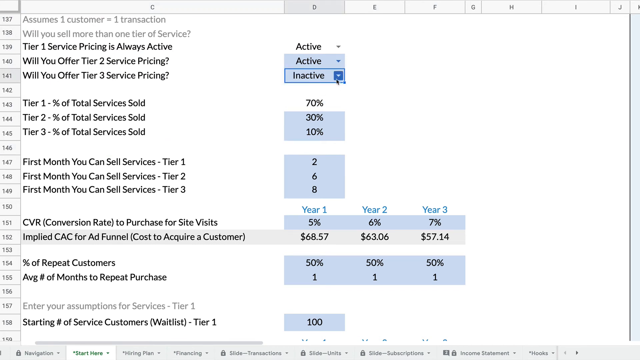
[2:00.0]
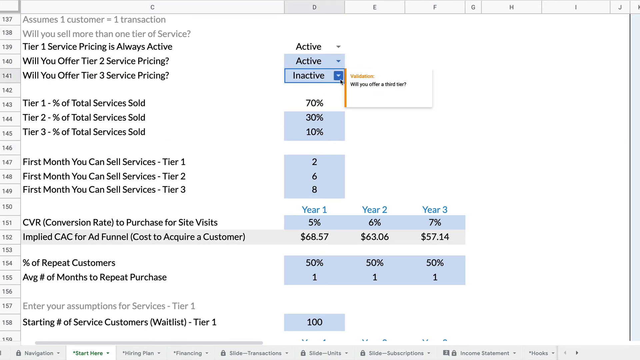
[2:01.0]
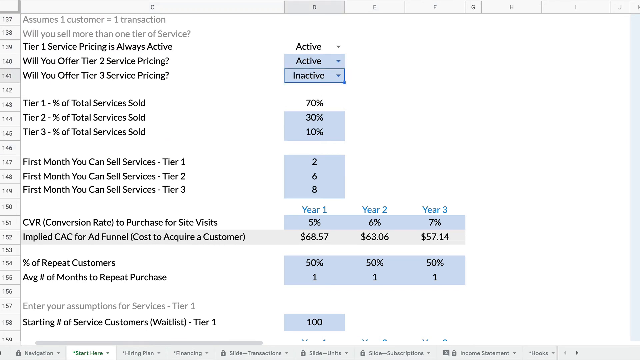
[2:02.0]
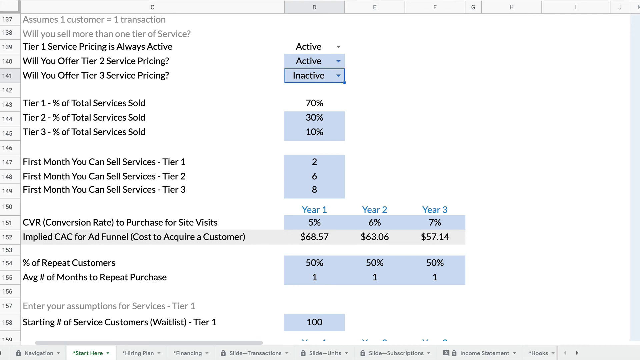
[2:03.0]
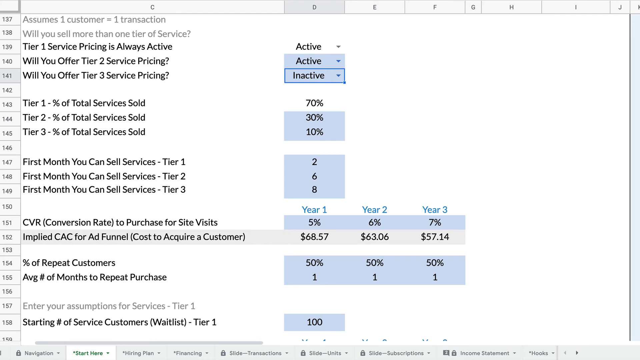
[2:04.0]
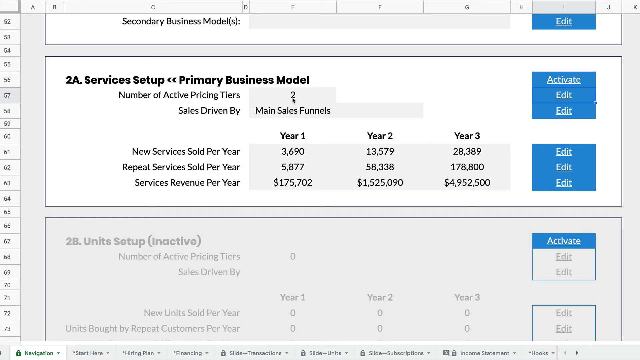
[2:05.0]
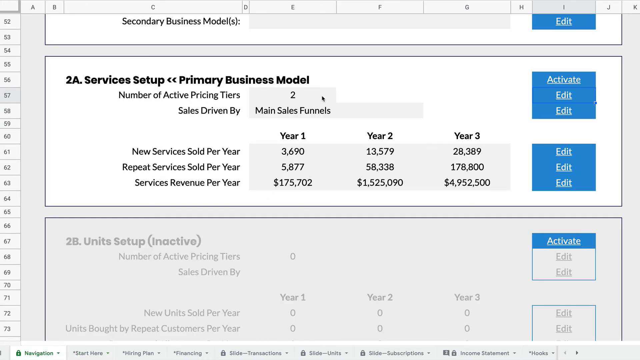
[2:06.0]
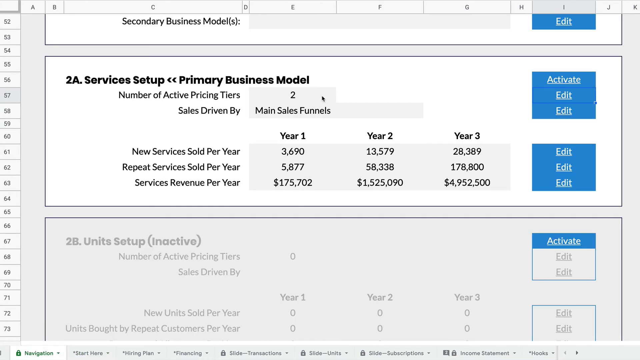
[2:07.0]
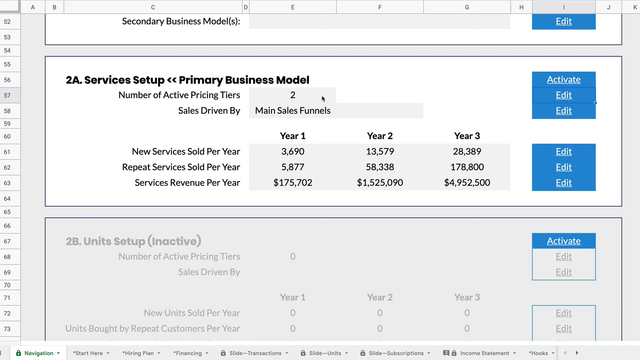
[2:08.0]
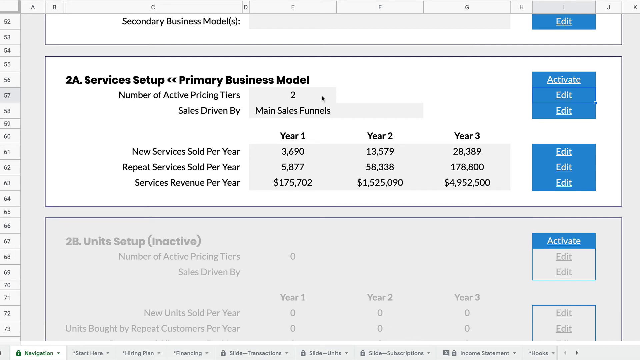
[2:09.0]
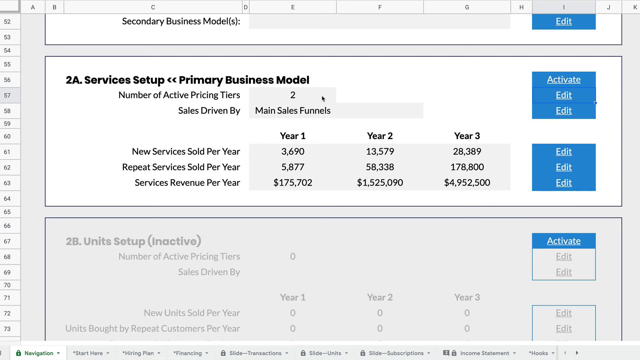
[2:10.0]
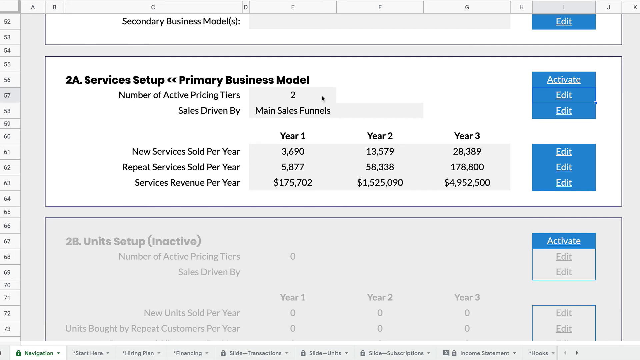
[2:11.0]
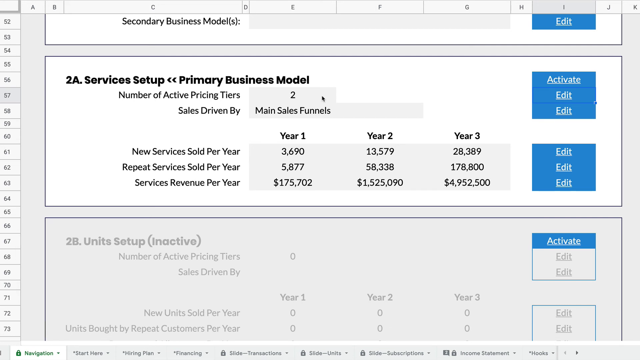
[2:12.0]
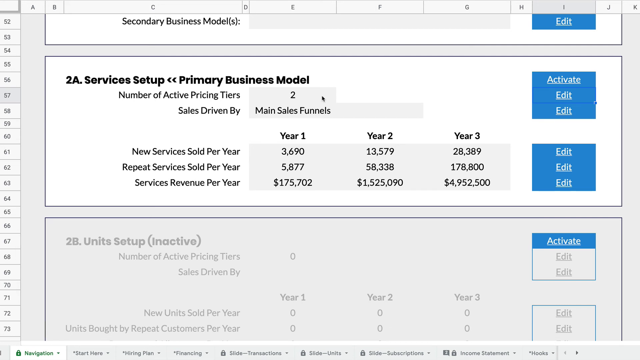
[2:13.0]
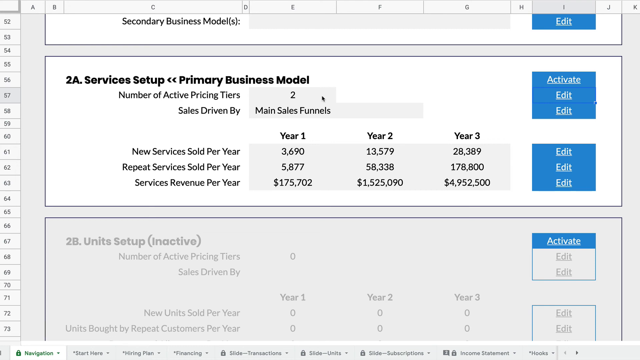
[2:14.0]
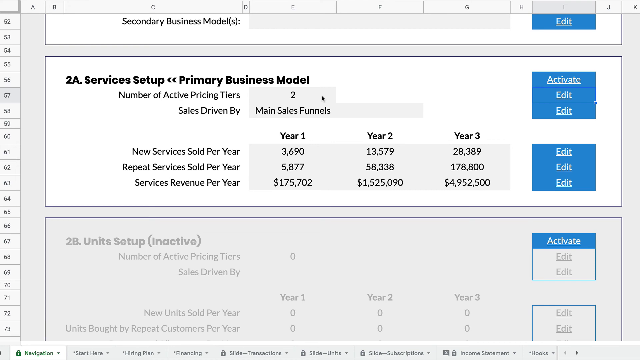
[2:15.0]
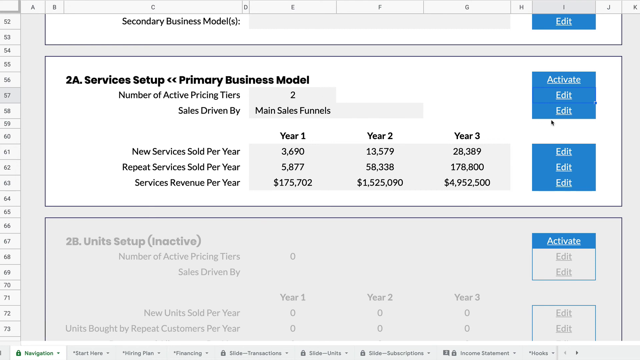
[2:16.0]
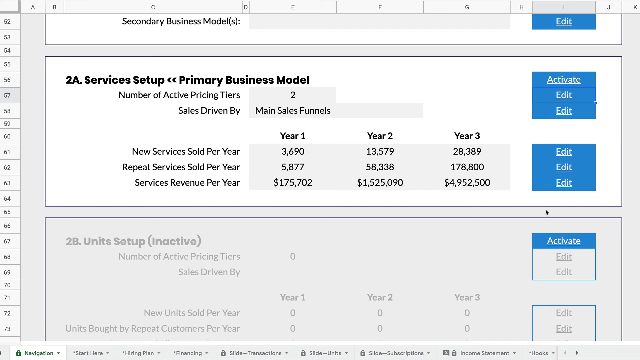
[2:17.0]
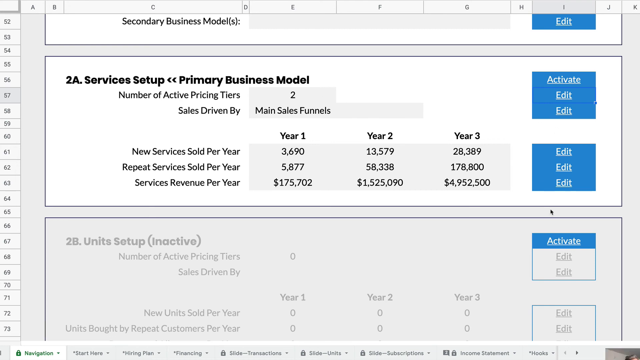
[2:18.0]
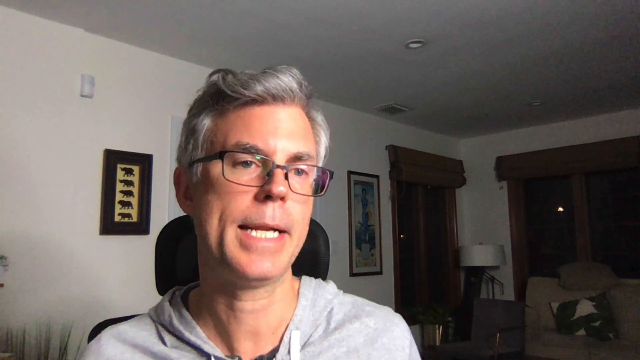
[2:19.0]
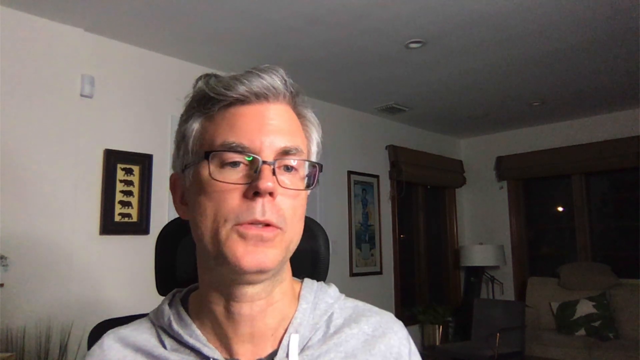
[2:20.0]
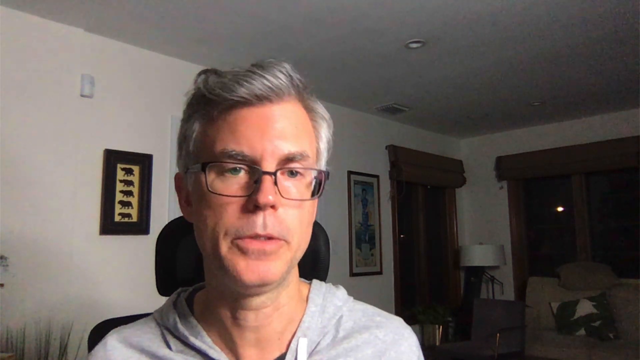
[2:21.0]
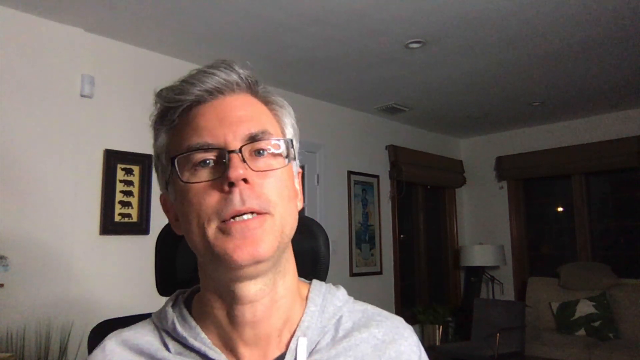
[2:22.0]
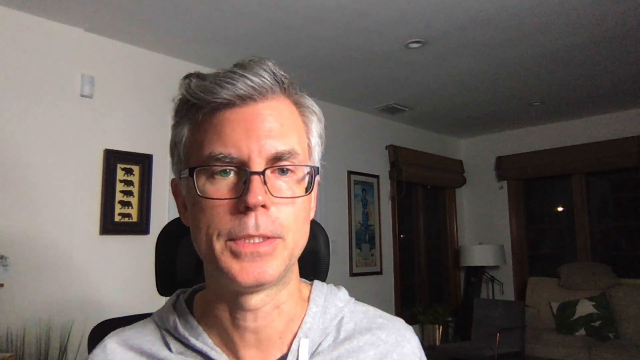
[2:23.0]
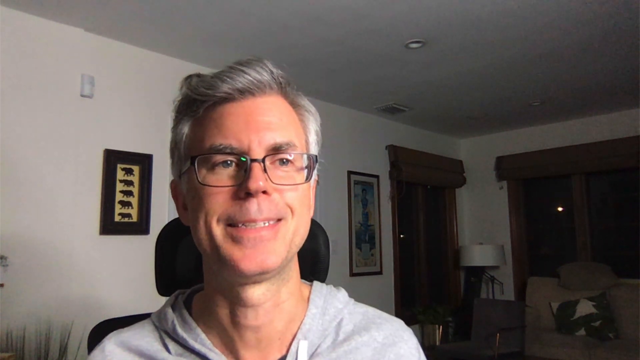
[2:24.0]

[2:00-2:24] Still on the pricing page, one parameter is changed to inactive. The view returns to the services business model section, where the number of active pricing tiers is updated to two because tier three was deactivated, apparently in real time. The video then returns to the man in his office. He is probably in his fifties, with gray hair, glasses, and a gray hoodie, sitting in a black office chair facing the camera. Behind him are a couch with a pillow, windows with blinds, a couple of paintings on the wall, and a table lamp in the back. One painting appears to show silhouettes of different animals, and there may be a plant to the side. The room is darkly lit in the back, but his face is well lit. He is the one doing the demonstration of the software.